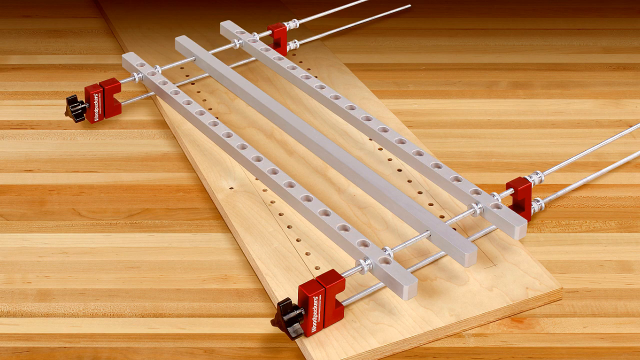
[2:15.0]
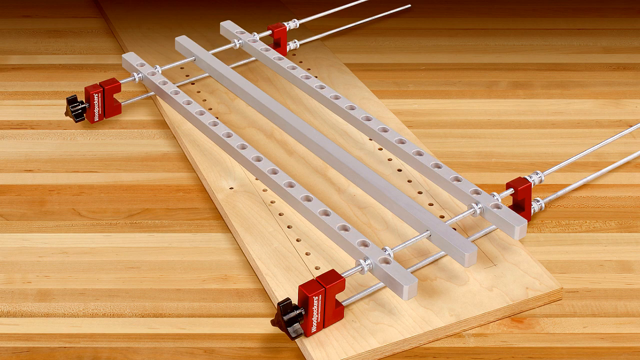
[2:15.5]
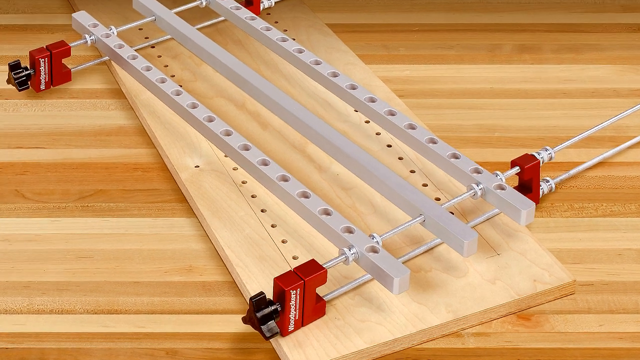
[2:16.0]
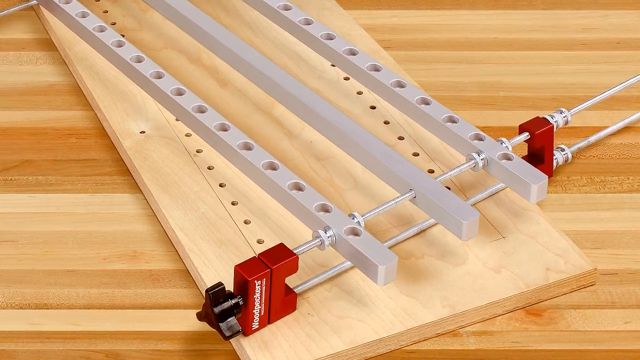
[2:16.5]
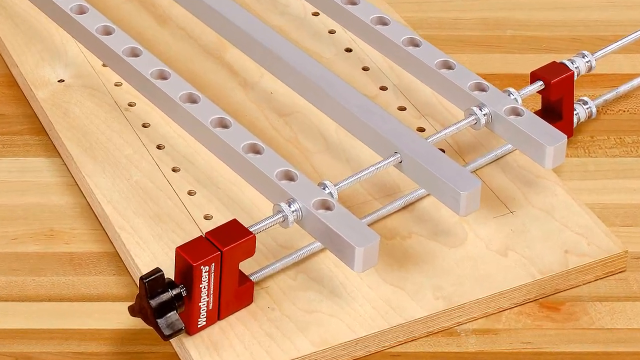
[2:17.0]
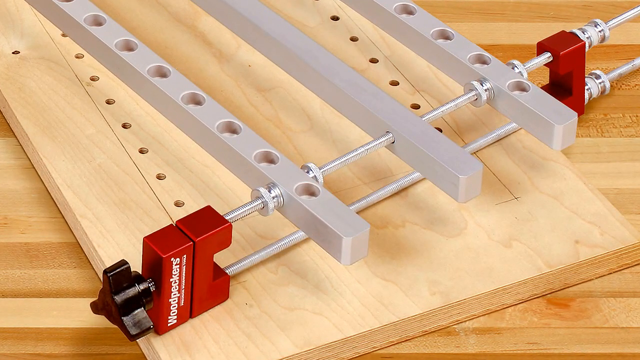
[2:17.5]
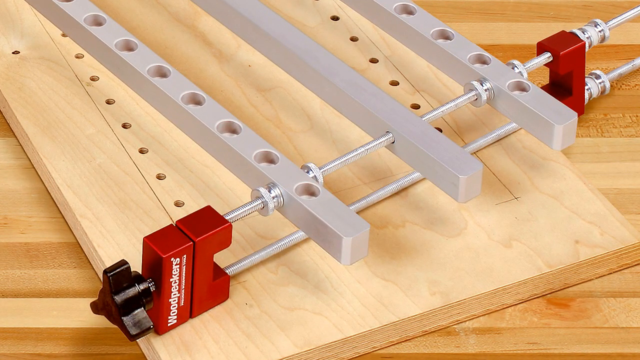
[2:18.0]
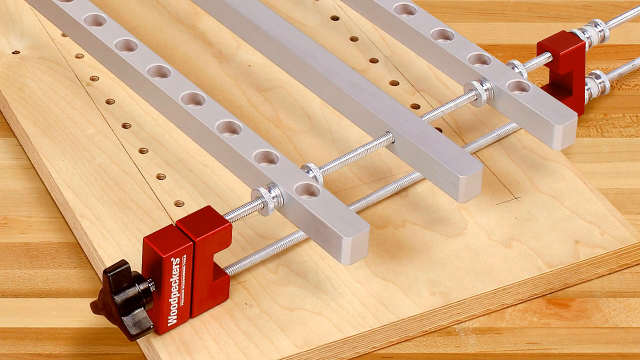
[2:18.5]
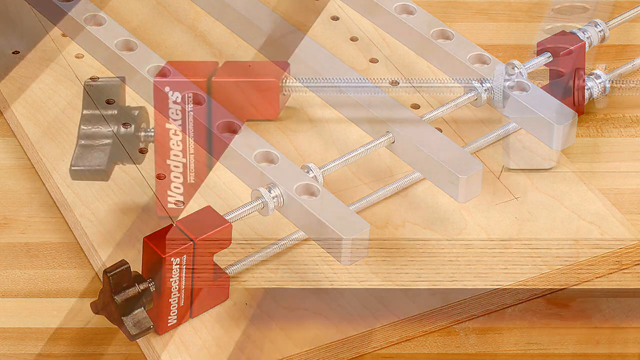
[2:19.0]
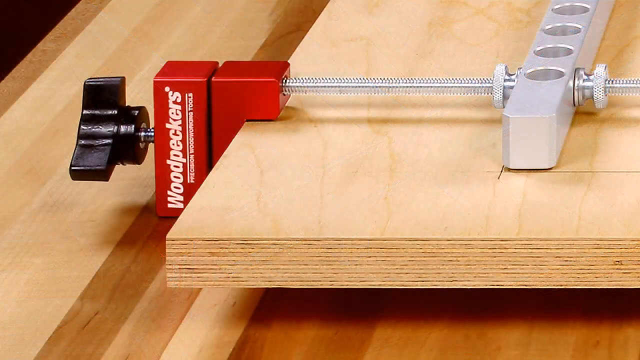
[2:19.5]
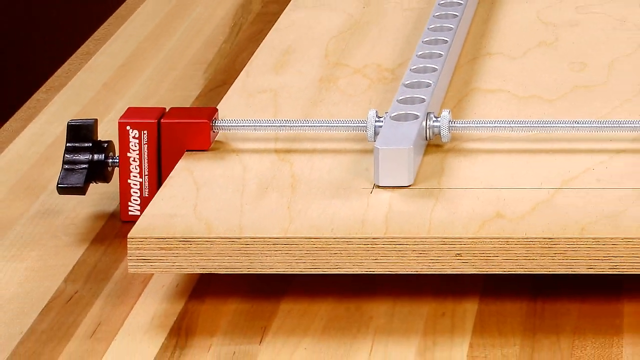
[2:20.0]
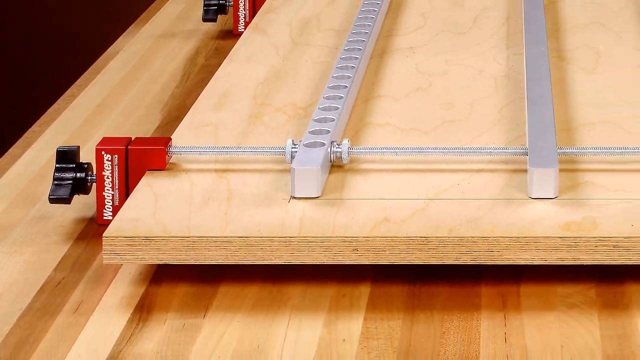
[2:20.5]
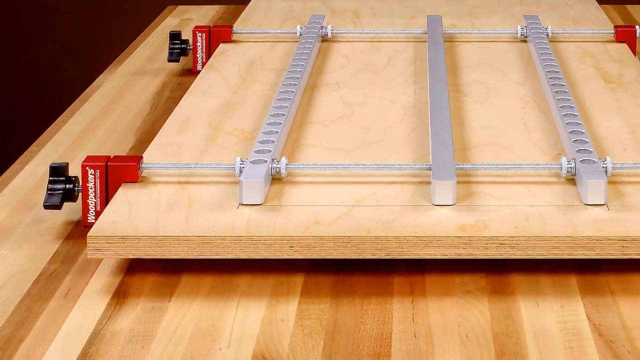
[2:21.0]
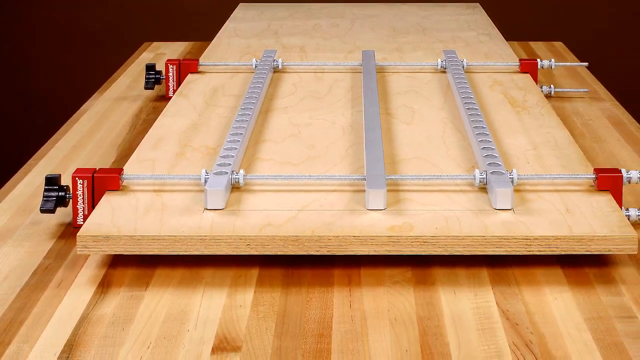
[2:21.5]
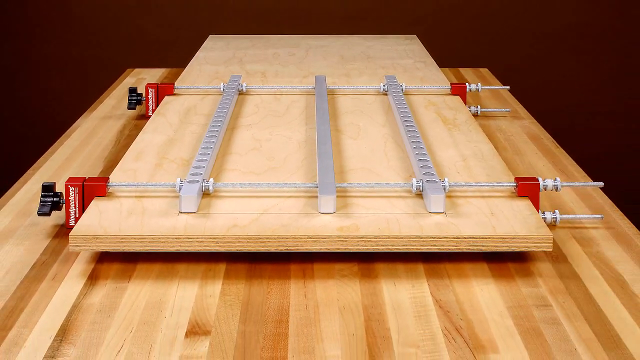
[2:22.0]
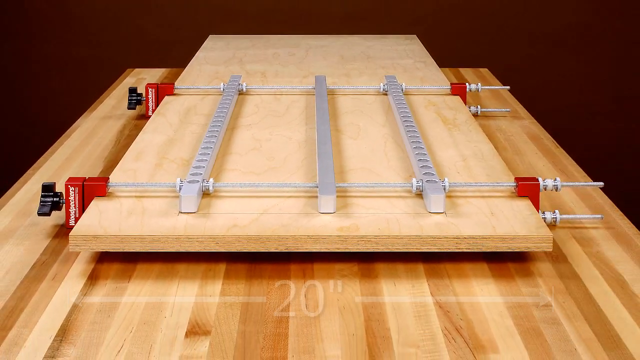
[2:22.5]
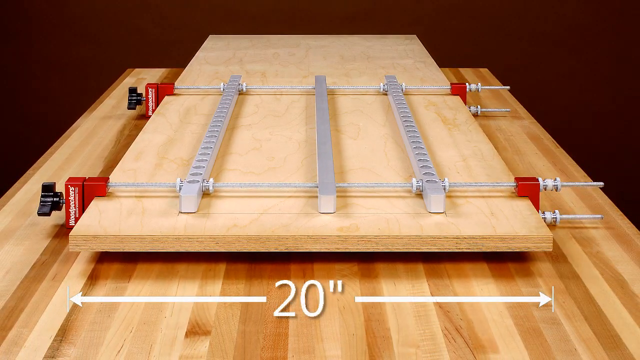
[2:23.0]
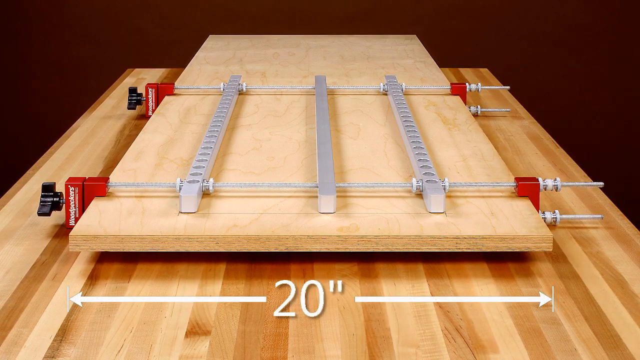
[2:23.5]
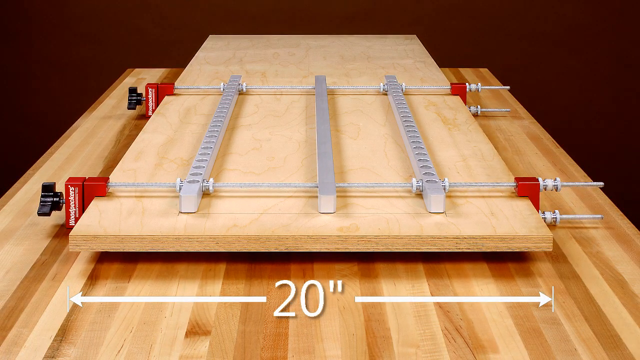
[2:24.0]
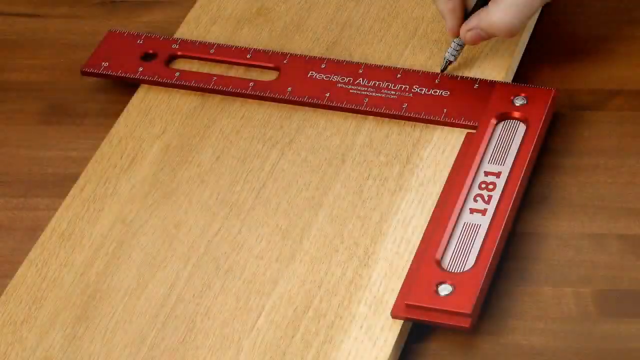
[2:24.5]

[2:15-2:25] The view goes in really close on the jig, showing it attached to a piece of wood 20 inches wide, with the measurement shown. Mostly the plywood with holes drilled into it and the jig are shown. At the very end there is a red L-shaped drawing tool for making straight lines, which apparently has the same Woodpeckers logo on it.